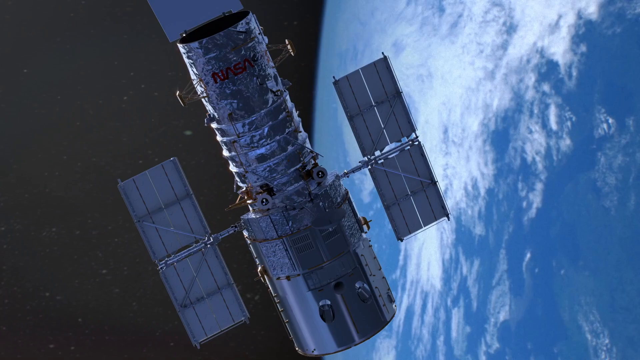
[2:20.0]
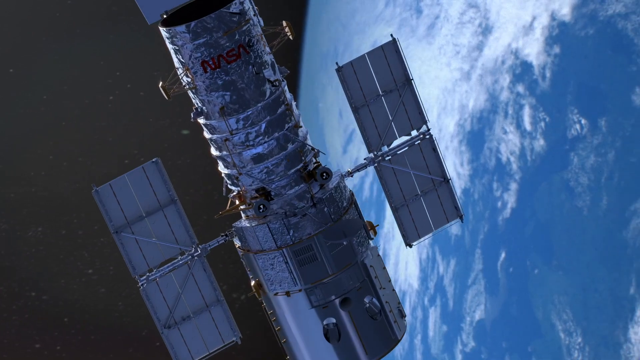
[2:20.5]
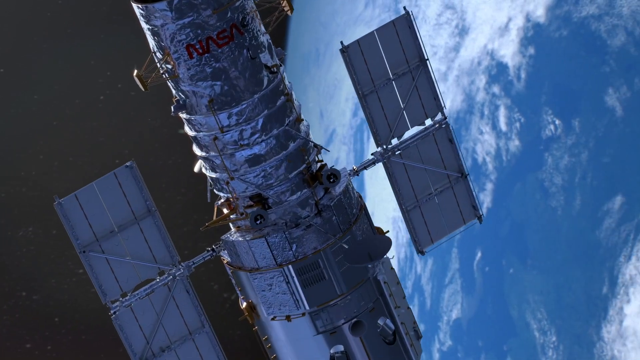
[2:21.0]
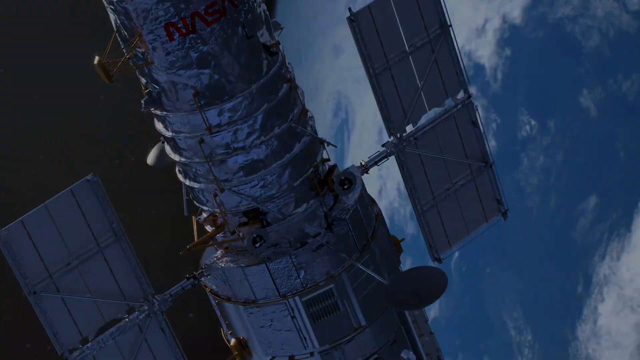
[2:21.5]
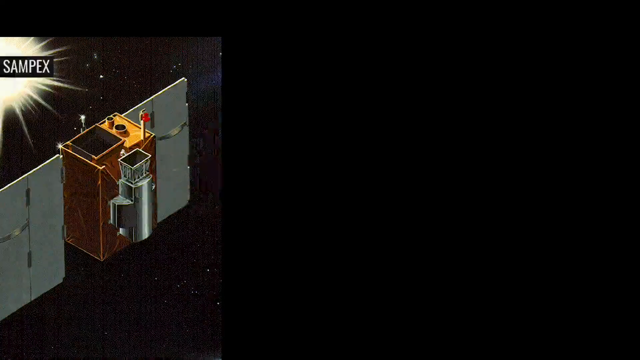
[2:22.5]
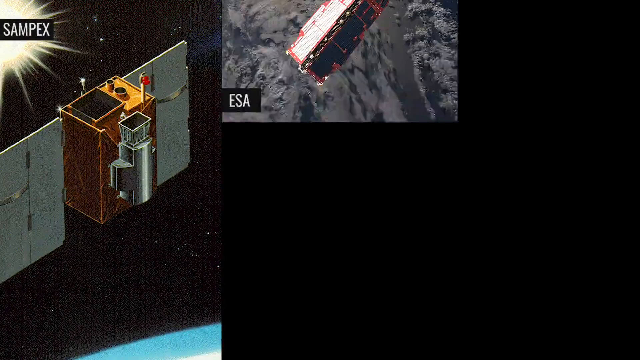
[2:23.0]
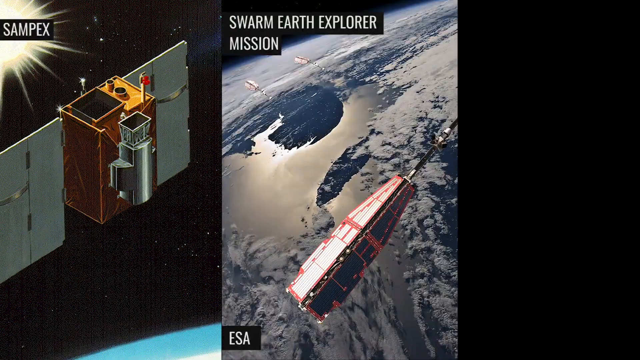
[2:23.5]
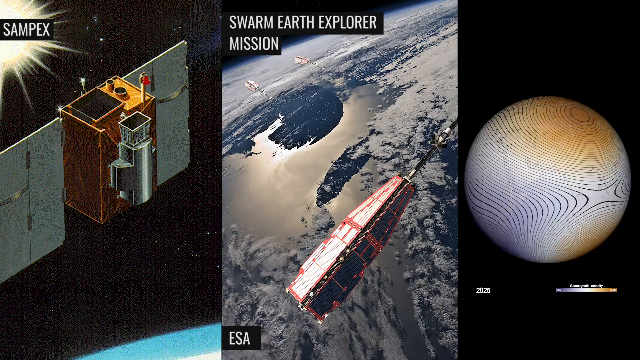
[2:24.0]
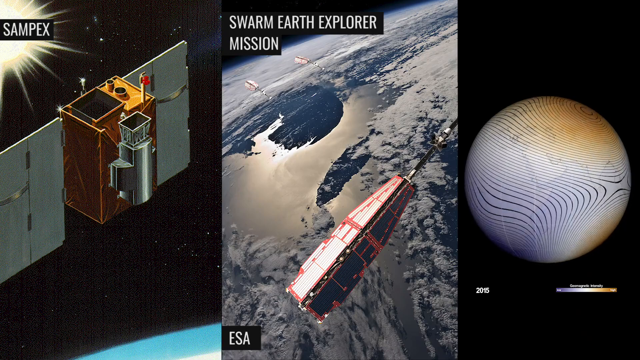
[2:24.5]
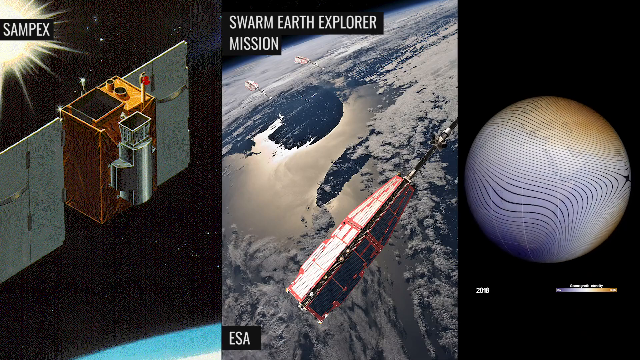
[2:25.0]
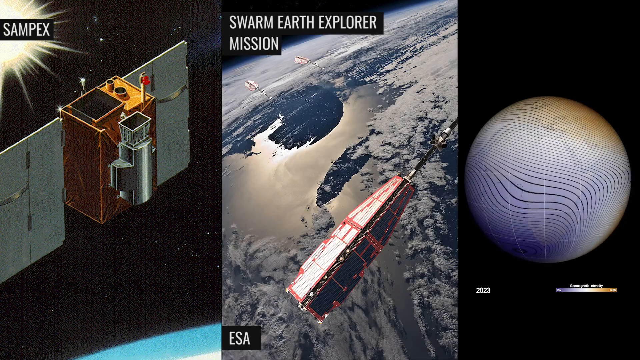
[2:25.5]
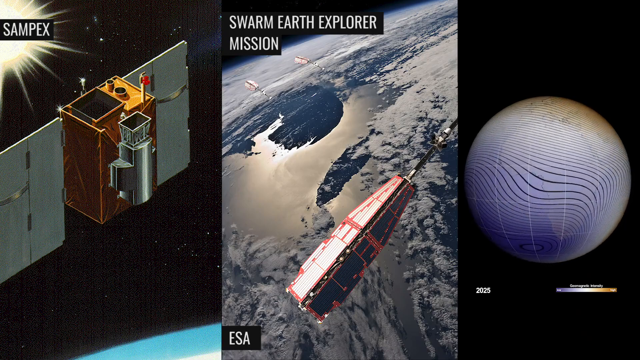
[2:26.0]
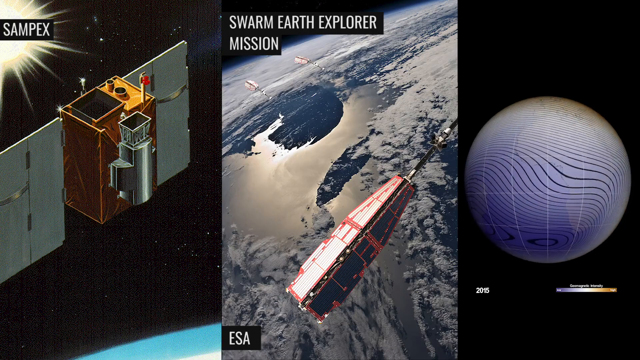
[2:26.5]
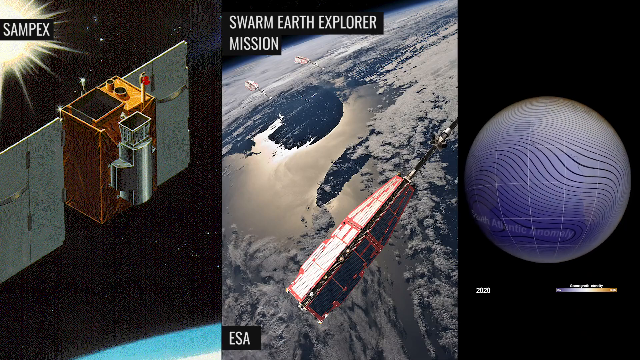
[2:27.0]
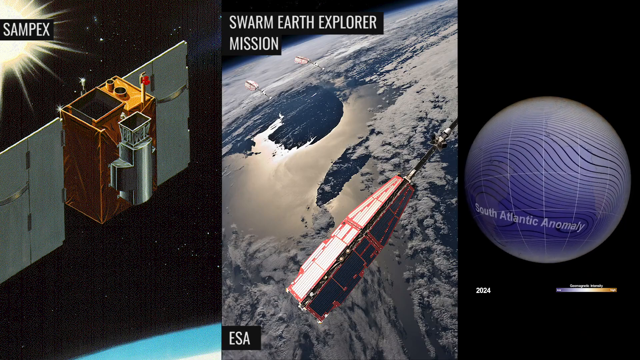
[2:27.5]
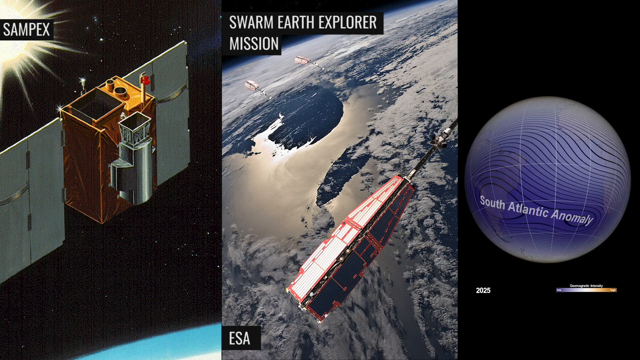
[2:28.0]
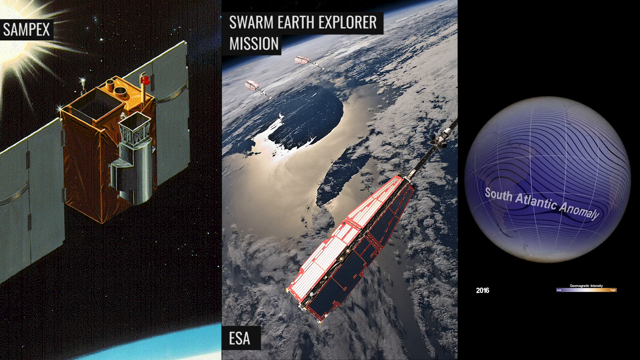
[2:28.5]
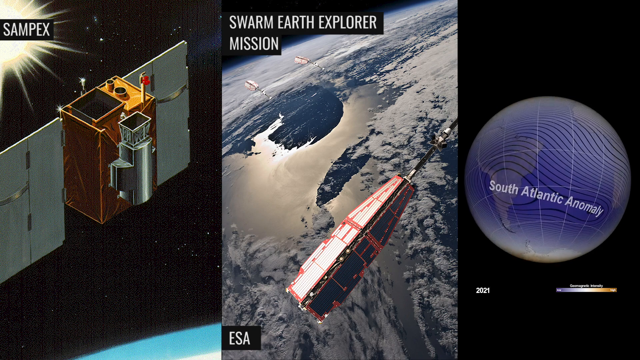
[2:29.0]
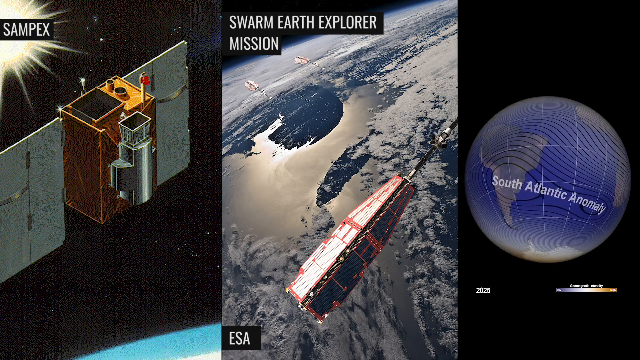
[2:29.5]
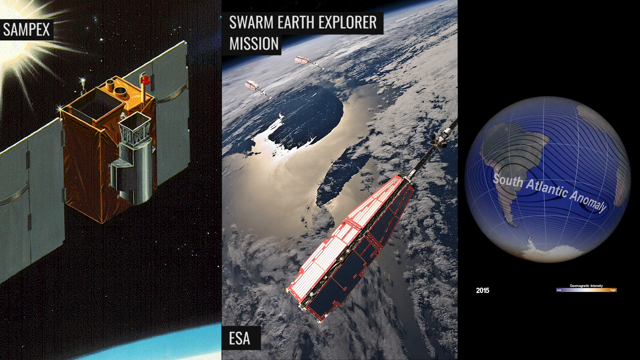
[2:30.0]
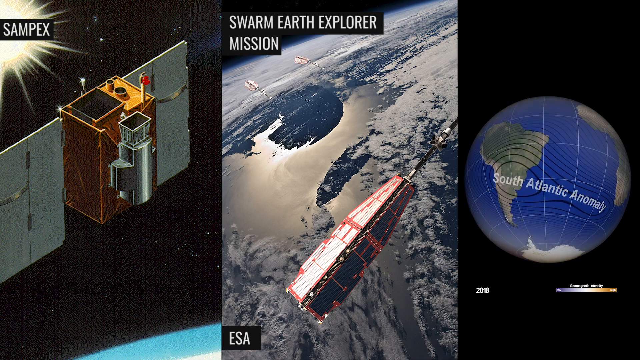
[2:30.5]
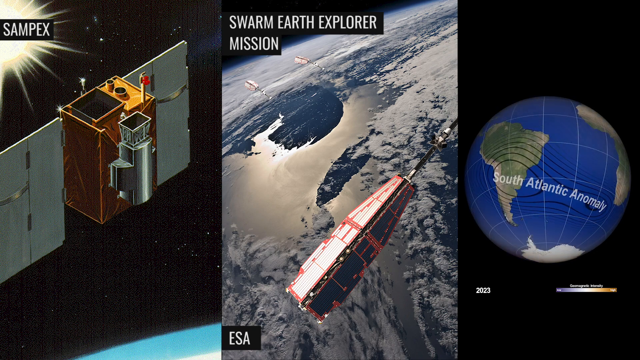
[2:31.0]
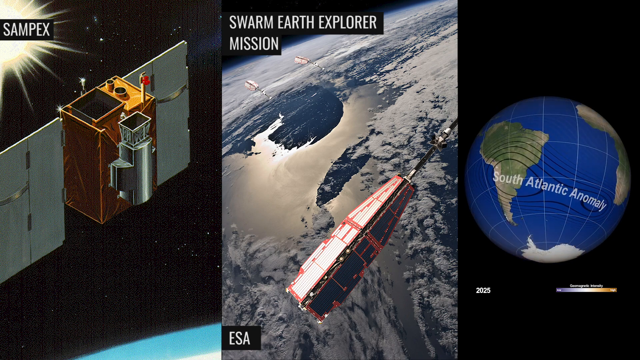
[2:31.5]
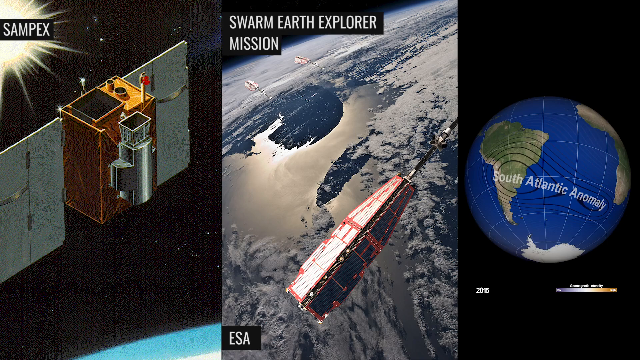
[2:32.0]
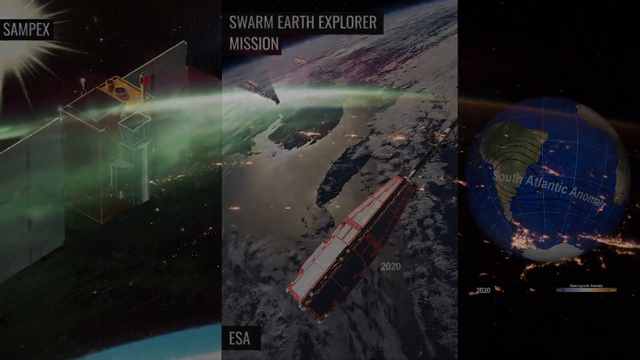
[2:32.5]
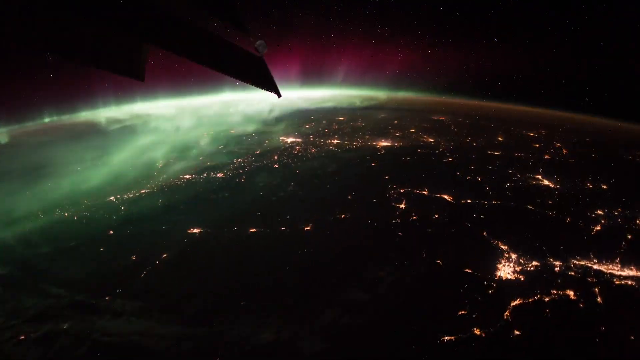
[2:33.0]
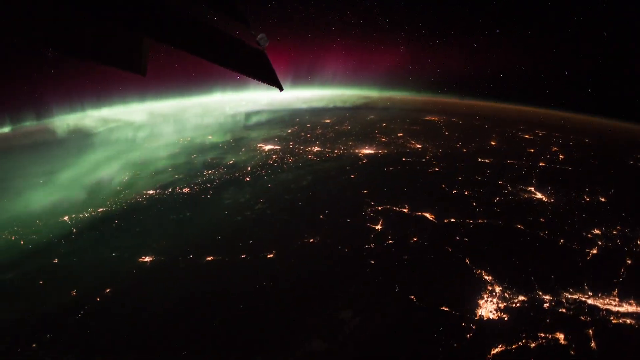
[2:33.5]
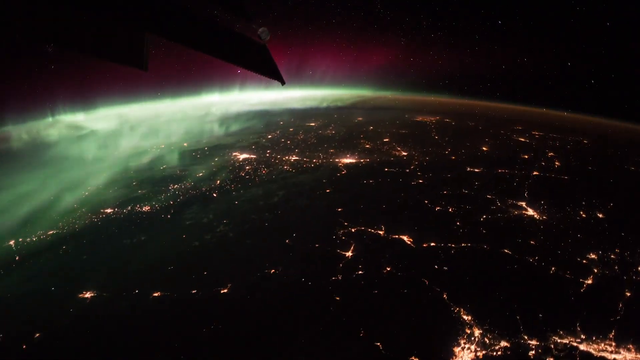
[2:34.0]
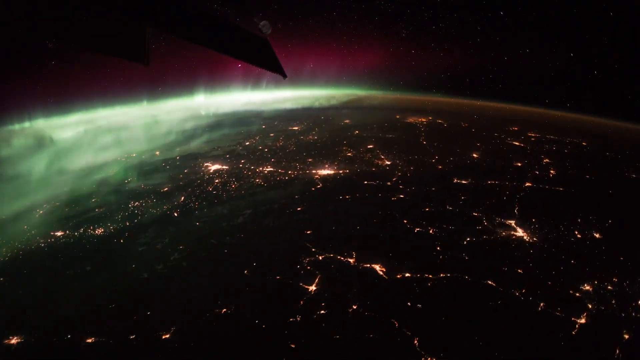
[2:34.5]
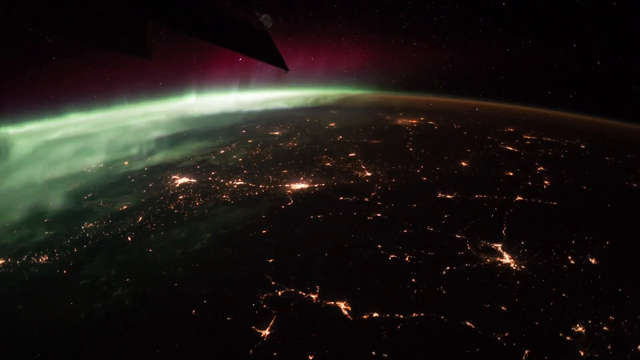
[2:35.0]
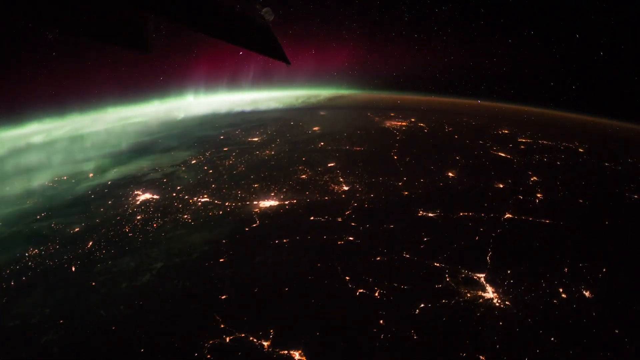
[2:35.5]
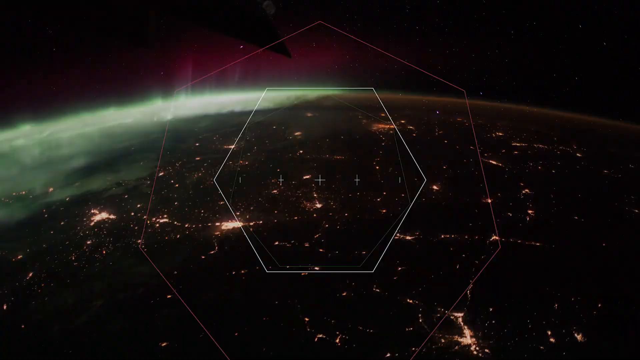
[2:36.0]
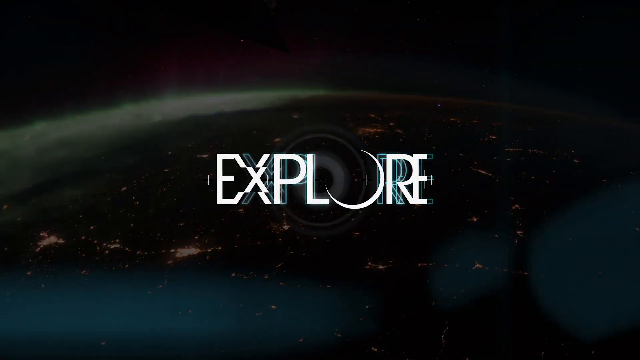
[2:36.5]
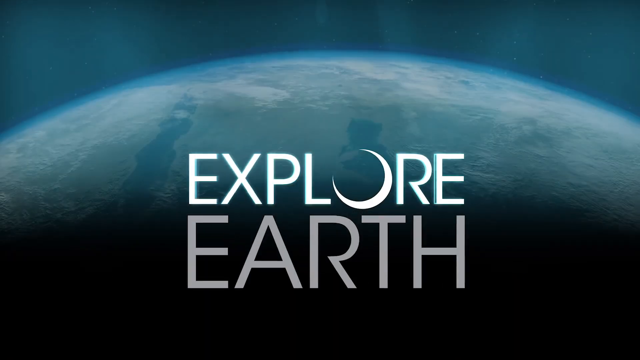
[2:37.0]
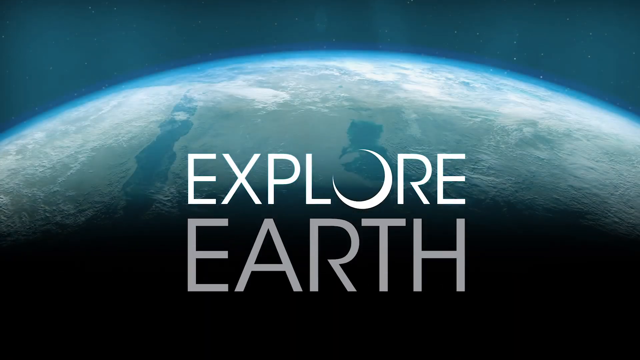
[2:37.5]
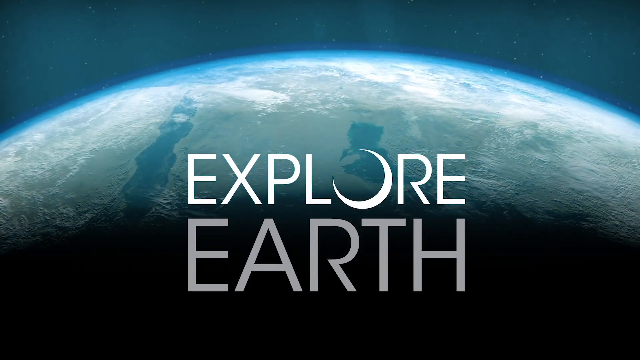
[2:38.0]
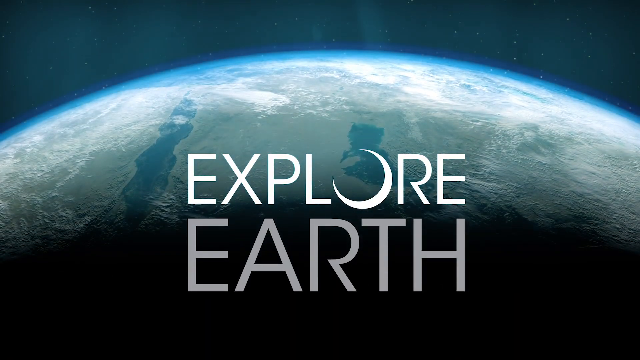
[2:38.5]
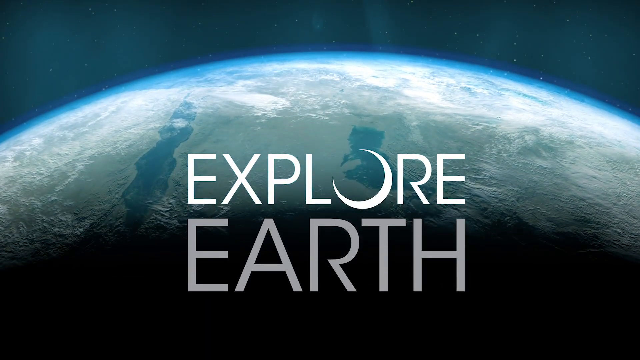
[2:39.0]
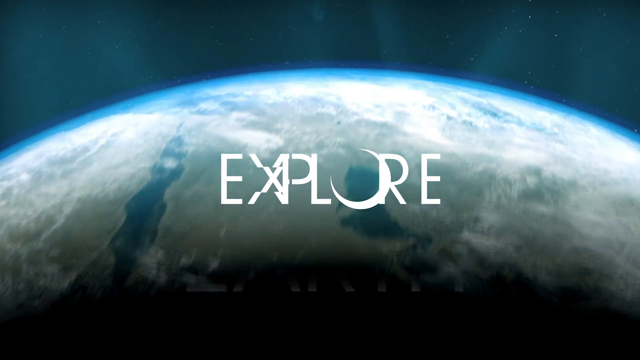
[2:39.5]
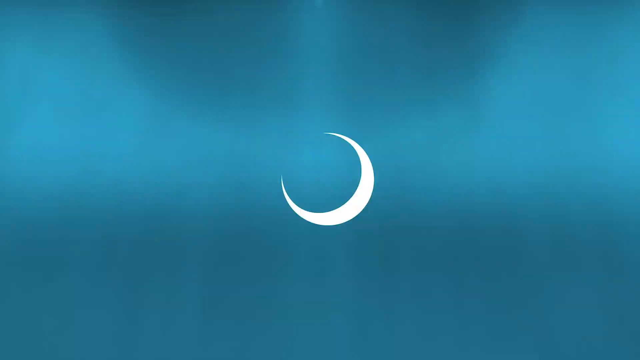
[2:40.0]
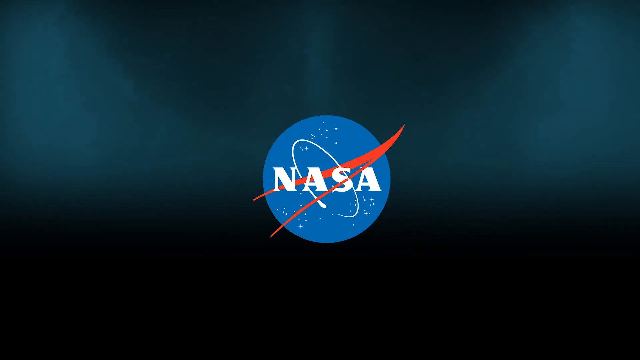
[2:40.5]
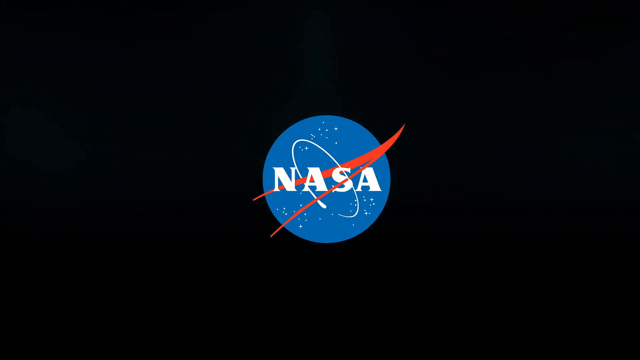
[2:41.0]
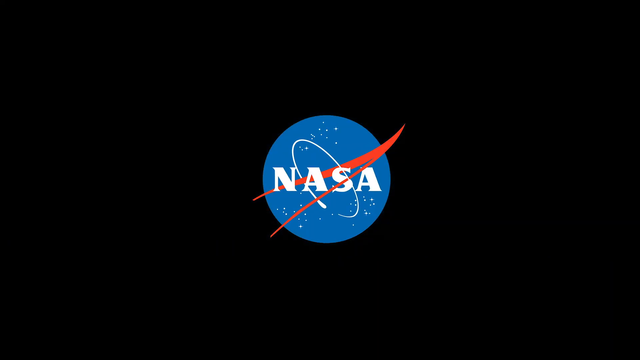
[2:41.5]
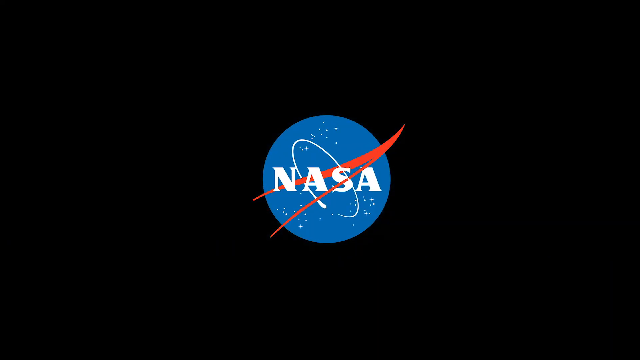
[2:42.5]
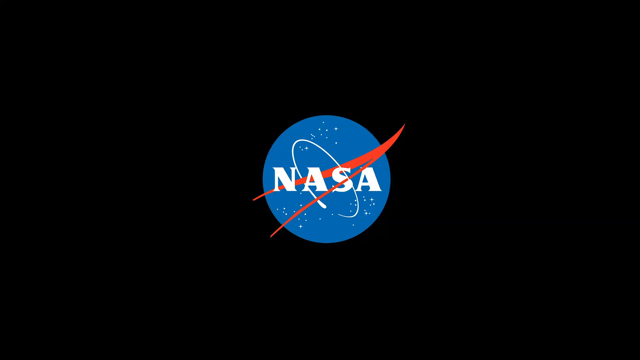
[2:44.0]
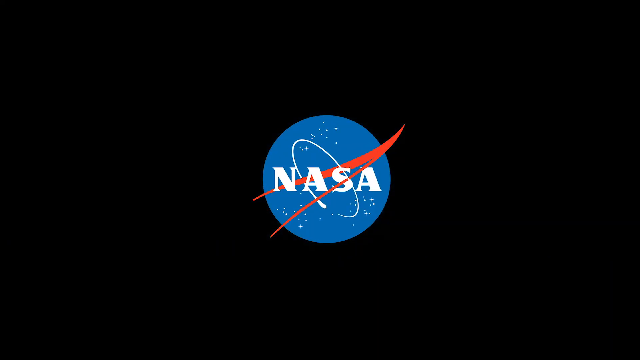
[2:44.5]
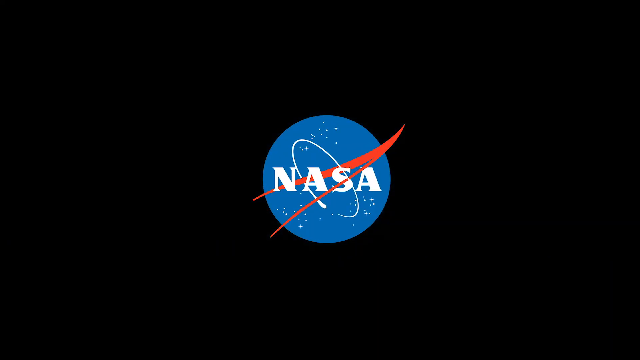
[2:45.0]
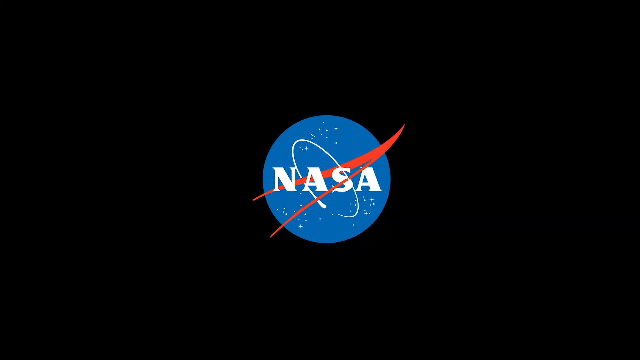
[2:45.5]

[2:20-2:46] A satellite with the word "NASA" in red on its underside floats above Earth, which is in the background; the view slowly zooms in closer to the satellite before the screen fades to black. Next, starting on the left side, the letters "S-A-M-P-E-X" accompany a diagram of an object floating in space, with what looks like the sun in the upper left-hand corner. The object is largely rectangular and appears to be made of silver metal and copper. The next panel is labeled "Swarm Earth Explorer Mission" and shows a similar object flying in space, more rounded and elongated and primarily made of a copper-colored material, floating over Earth with water and clouds in the background. The rightmost panel, on a black background, shows an image of Earth in a kind of faded gray color, covered in a rippling pattern of black lines; as the globe turns to South America, the words "South Atlantic anomaly" appear in white letters. The video then pans across an image of Earth's surface at night, showing lights and cities far below, with a rippling pattern of green and red just over the atmosphere. Finally, the video zooms out to a more cartoon image of Earth with the words "EXPLORE EARTH", and the NASA logo appears on a black background.